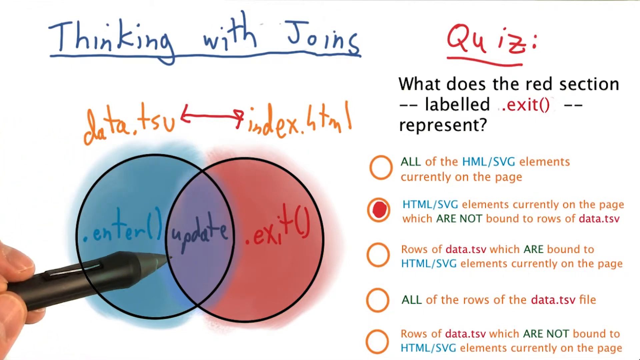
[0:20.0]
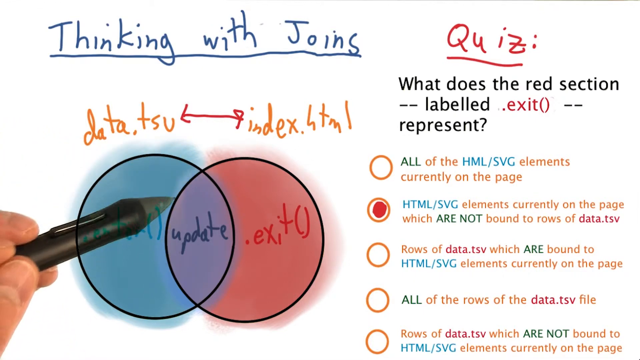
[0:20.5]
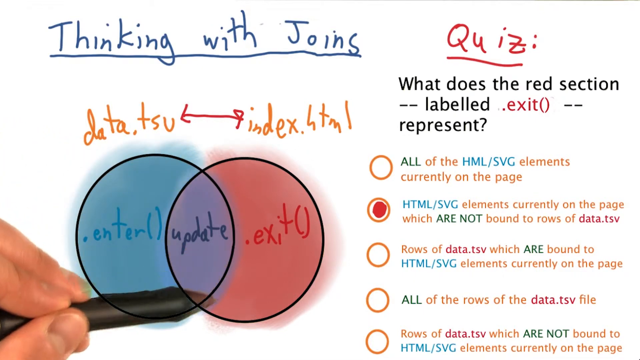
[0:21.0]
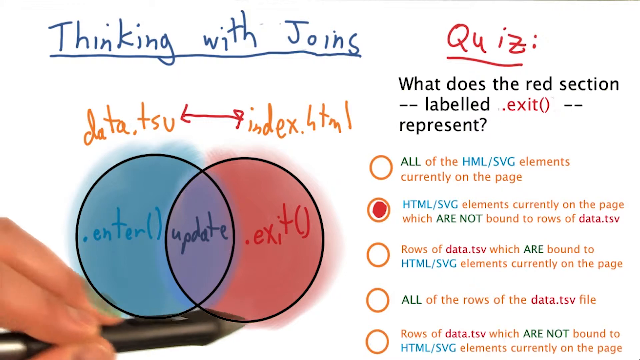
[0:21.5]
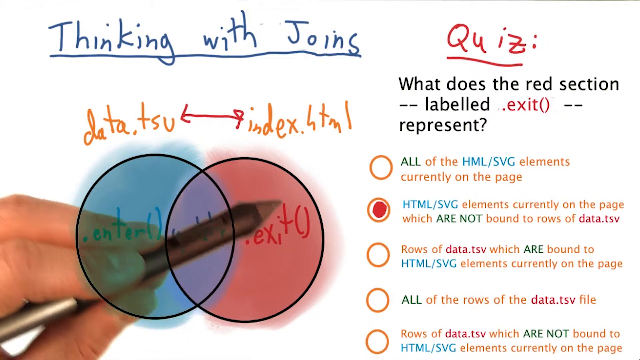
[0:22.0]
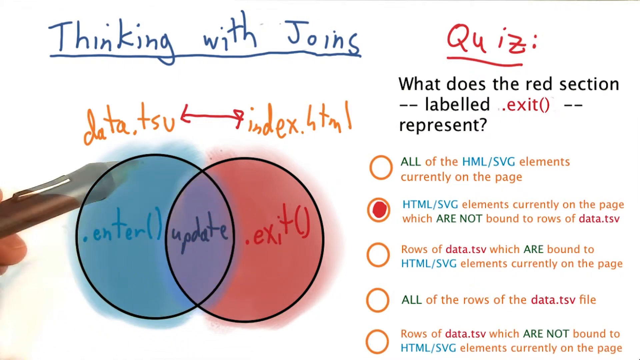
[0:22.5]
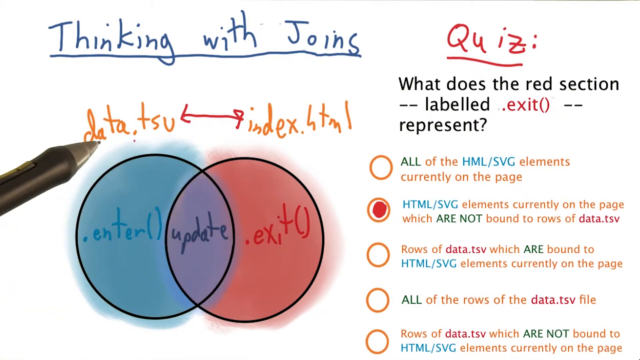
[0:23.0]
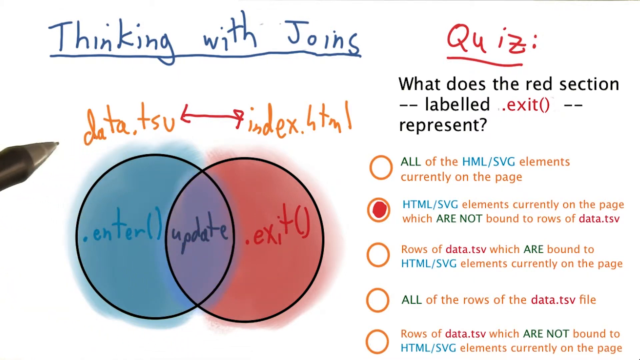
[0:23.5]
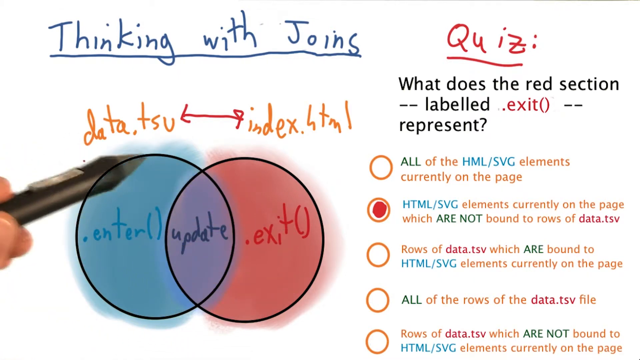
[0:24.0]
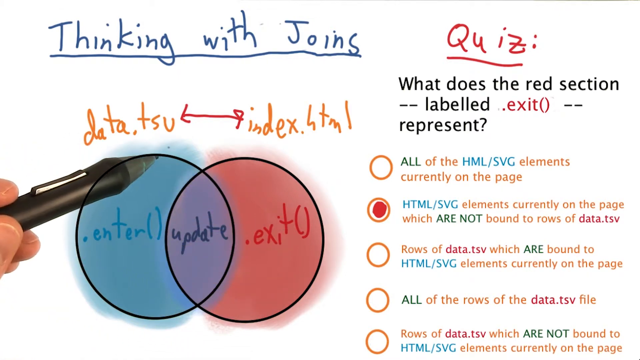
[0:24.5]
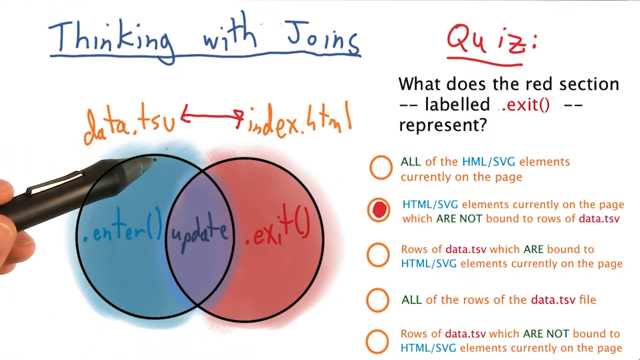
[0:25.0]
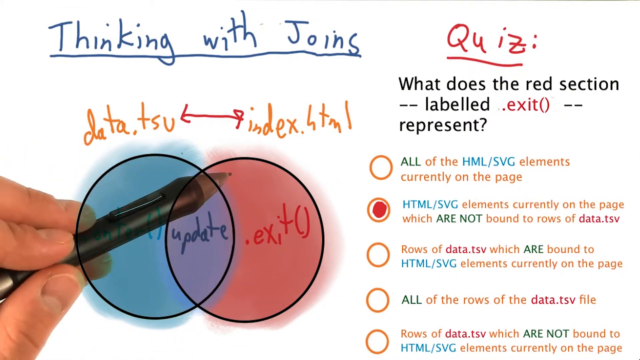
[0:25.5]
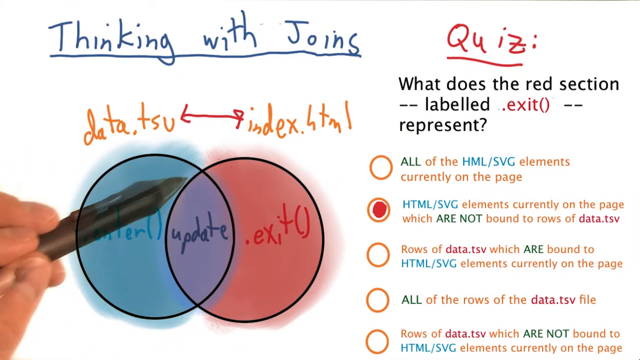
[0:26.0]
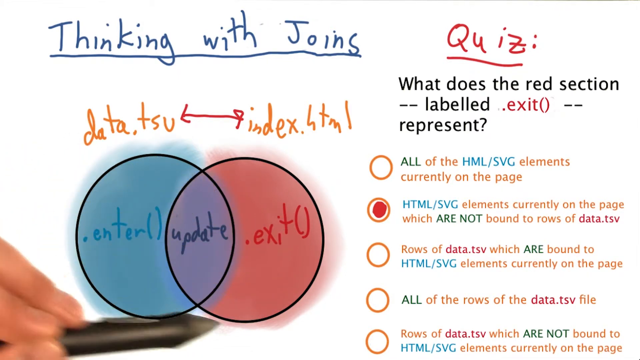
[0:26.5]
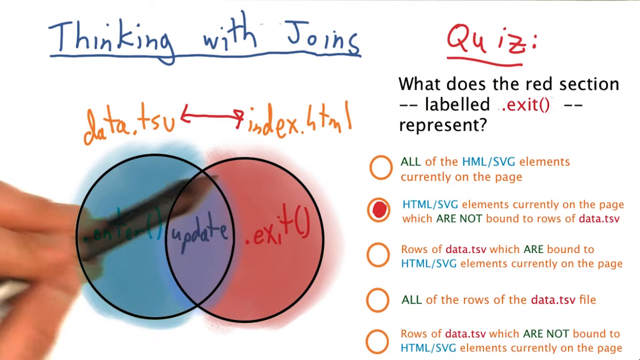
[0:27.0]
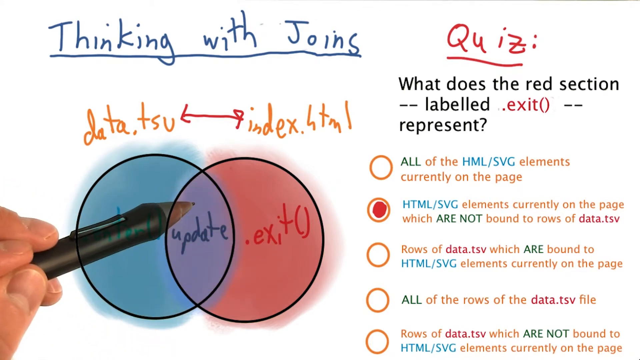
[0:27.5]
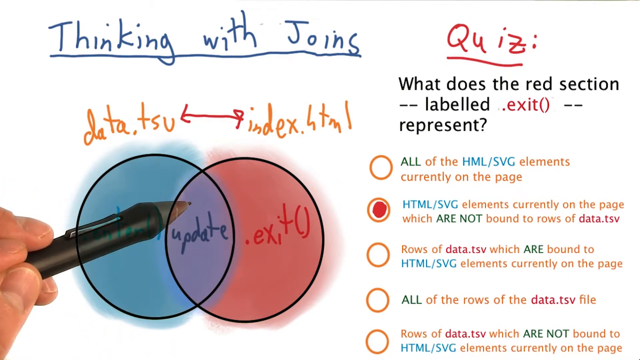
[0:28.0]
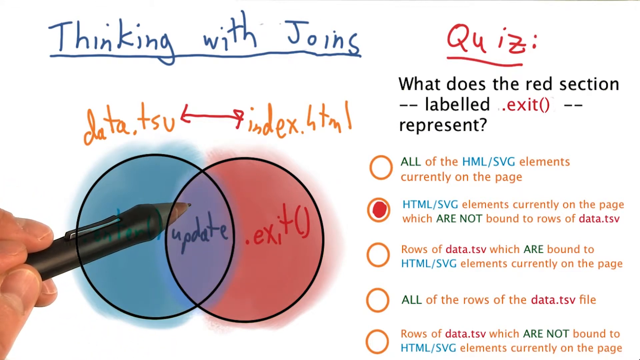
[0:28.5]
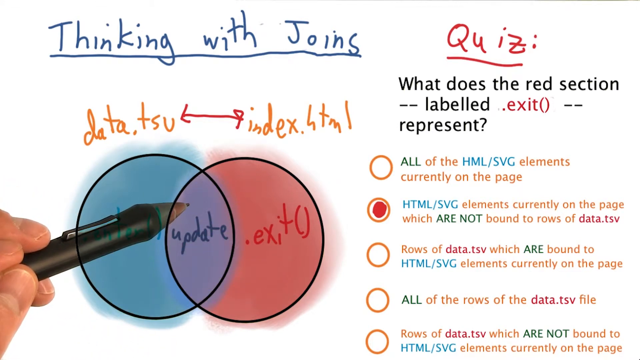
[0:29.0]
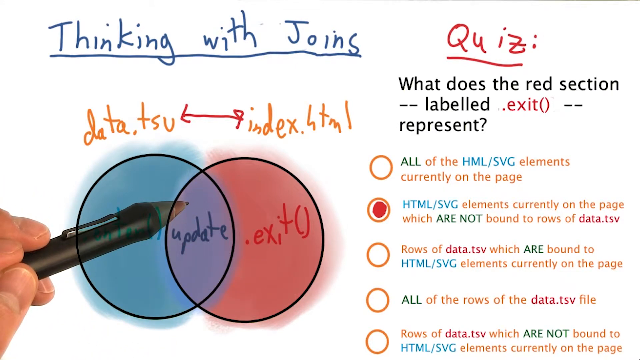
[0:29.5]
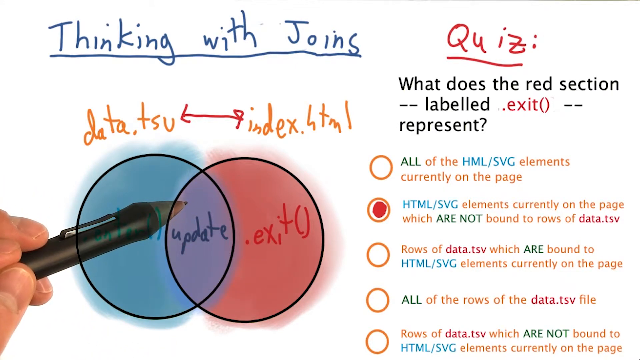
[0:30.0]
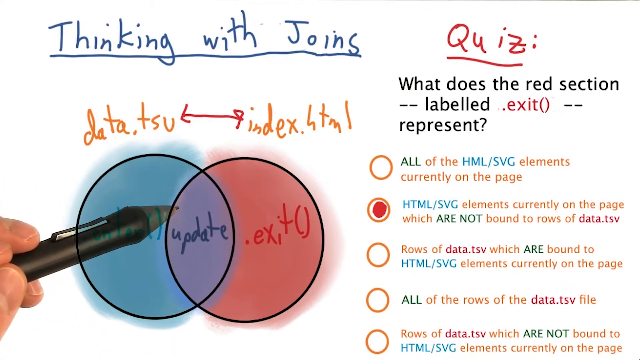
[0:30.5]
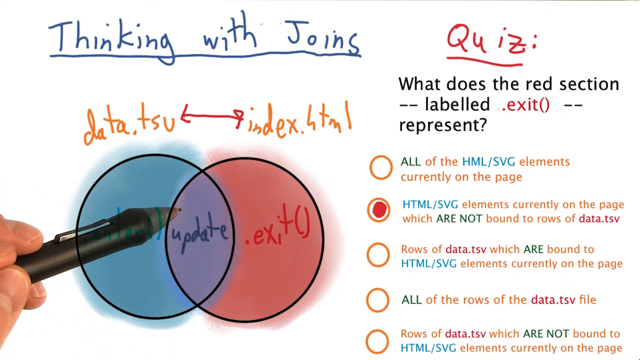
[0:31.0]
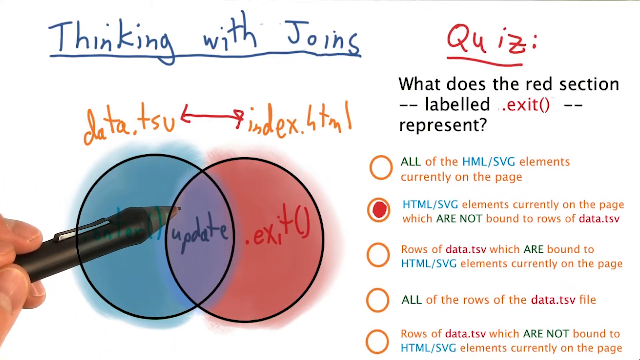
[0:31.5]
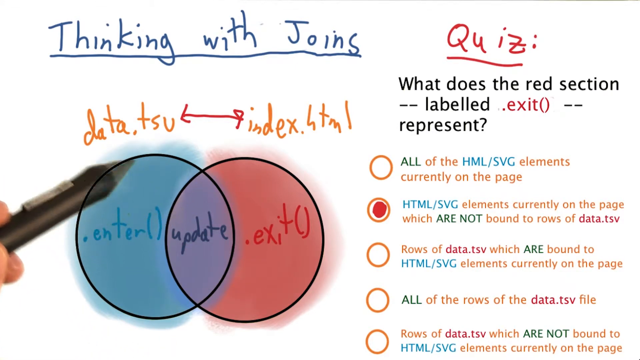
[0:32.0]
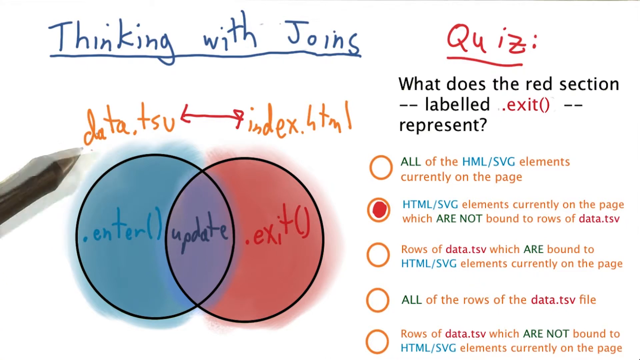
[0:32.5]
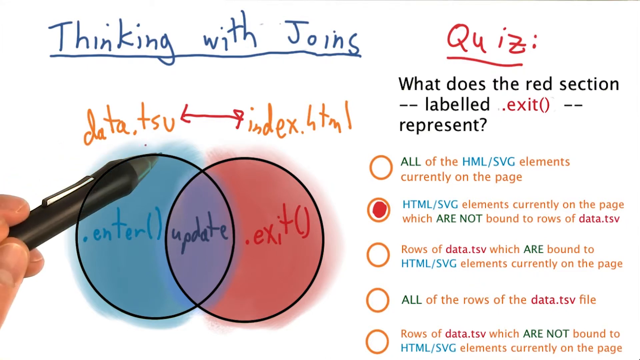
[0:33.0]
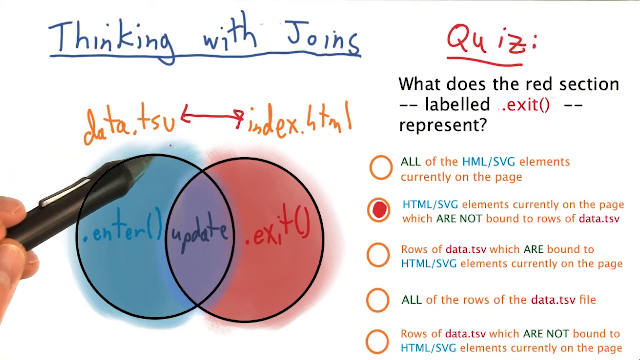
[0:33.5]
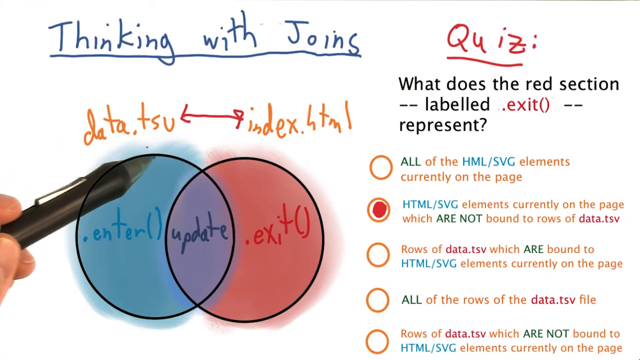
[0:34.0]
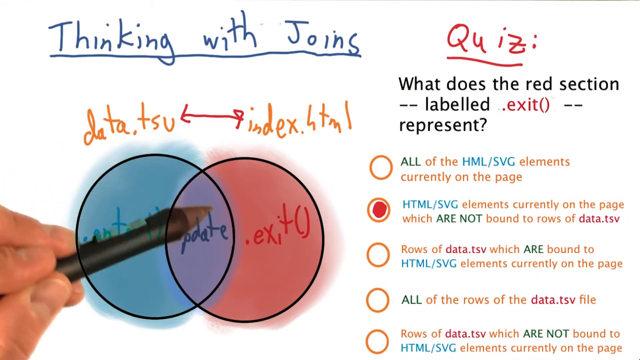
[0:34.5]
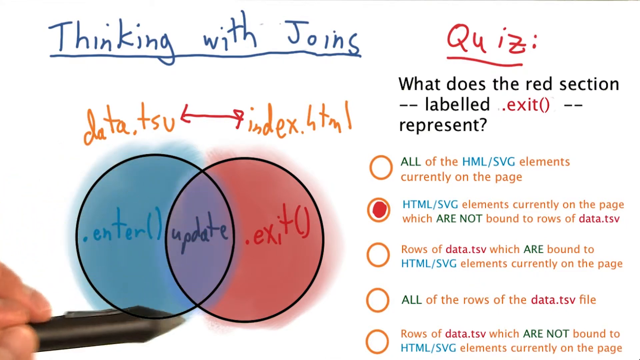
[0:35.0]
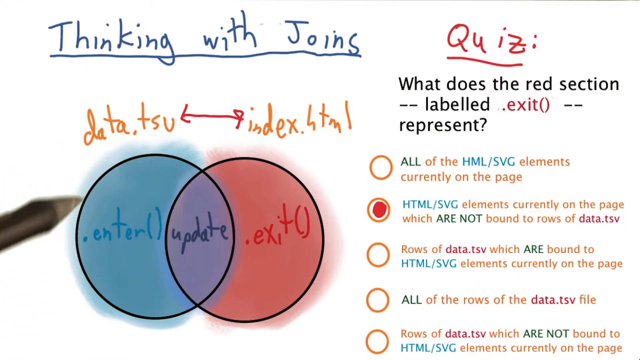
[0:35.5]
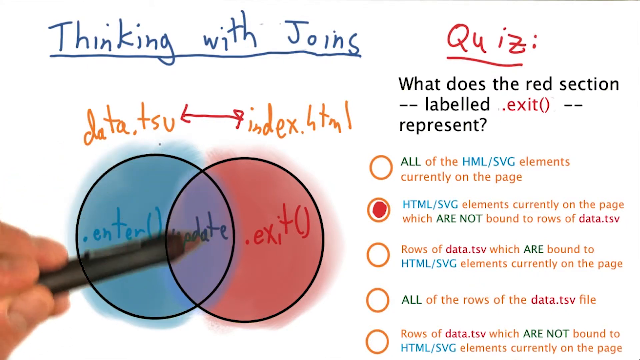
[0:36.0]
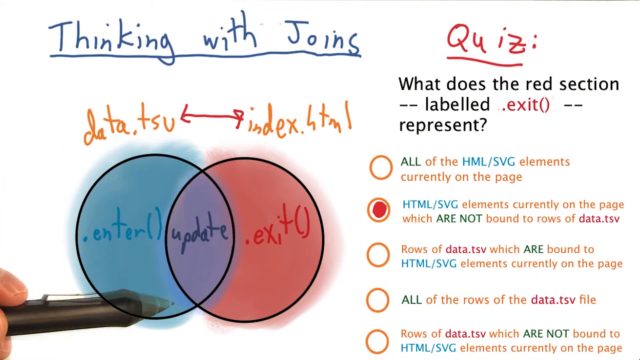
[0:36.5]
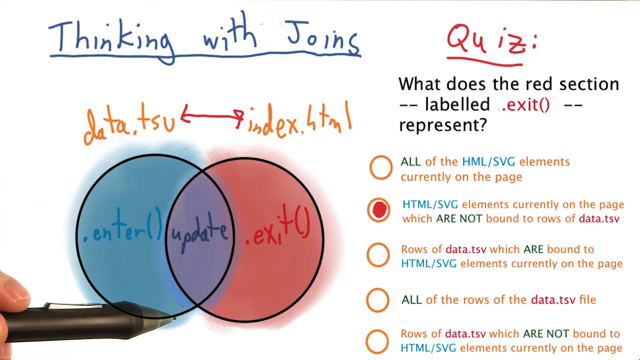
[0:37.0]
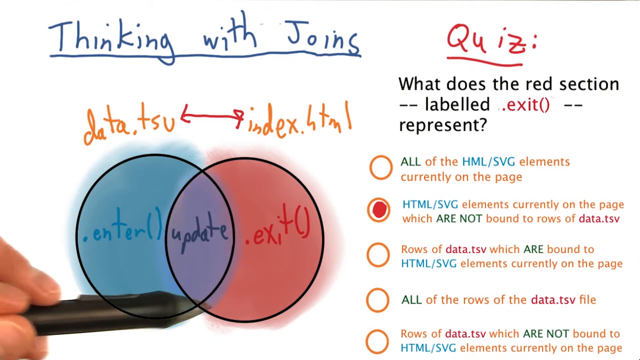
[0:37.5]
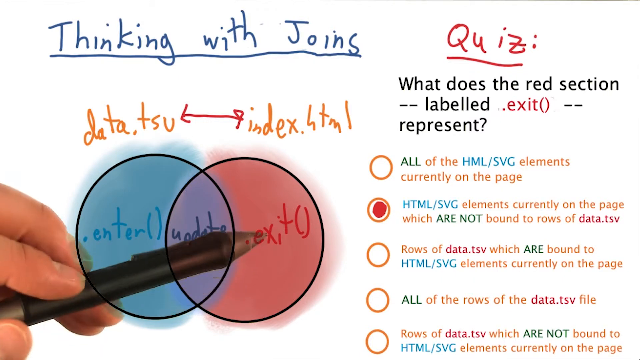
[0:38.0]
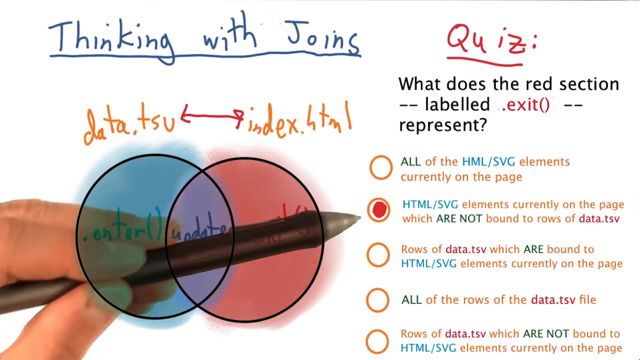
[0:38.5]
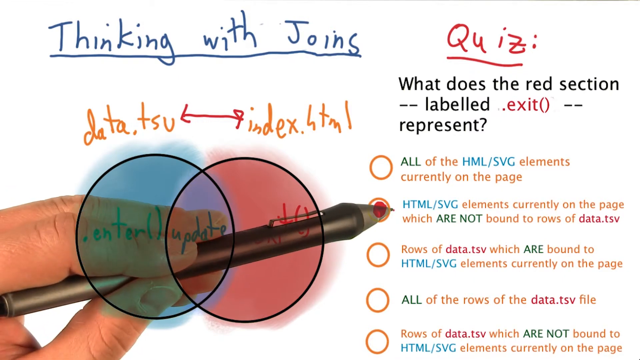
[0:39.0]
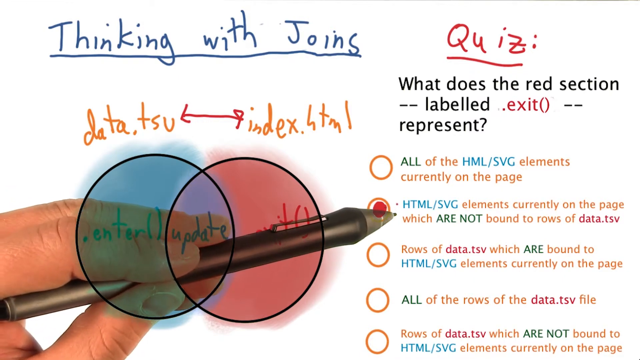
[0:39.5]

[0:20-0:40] The pen makes a circular motion over the entire Venn diagram again, points at each side, and then hovers in the center, which is purple and says "update". It circles the whole left circle, the ".enter" side, then moves over to the right and points at the second quiz option, which is marked as if it is the correct answer and says "HTML/SVG elements currently on the page which are not bound to rows of data.tsv". The page is a mixture of printed and handwritten text, and it looks like the middle of a lesson, since the teacher has already handwritten several pieces of information on the screen. The title "Thinking with Joins" is handwritten in blue with a line underneath it. Below it, "data.tsu" is handwritten in orange, followed by a red arrow and "index.html", also handwritten in orange. The Venn diagram at the bottom is computer generated, but the shading was probably done by the teacher. The left side reads ".enter()" and is shaded blue, the center reads "update" and is shaded purple, and the right side reads ".exit()" and is shaded red.